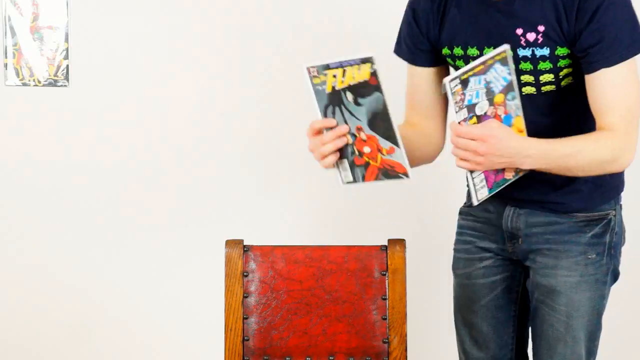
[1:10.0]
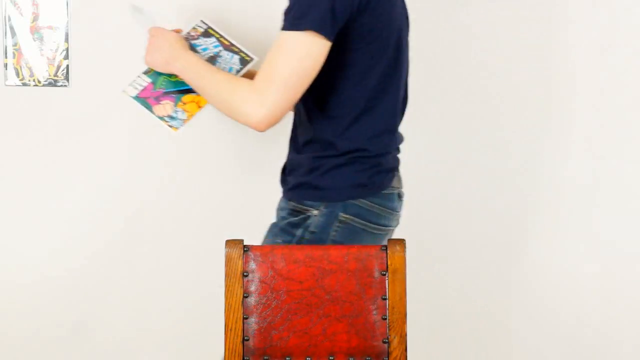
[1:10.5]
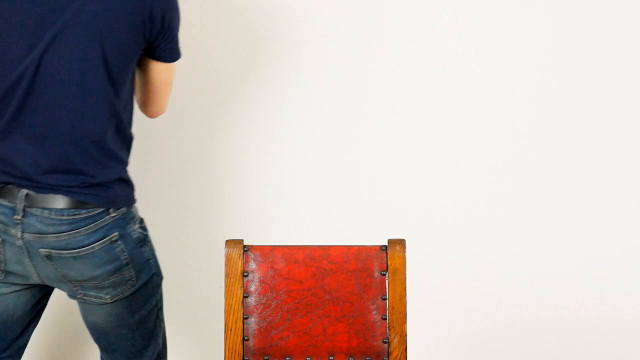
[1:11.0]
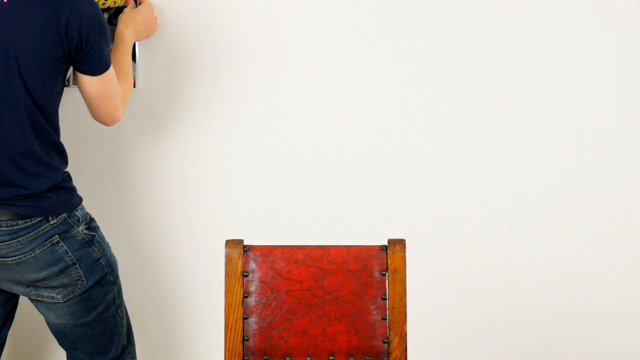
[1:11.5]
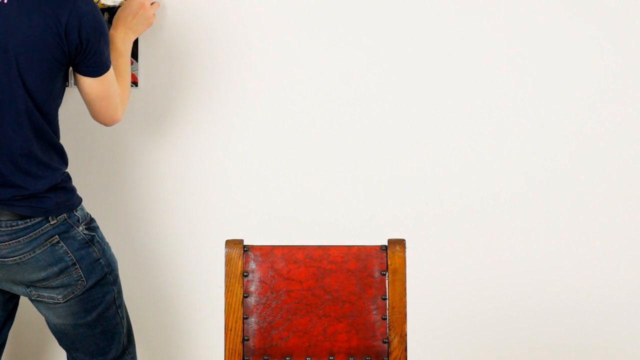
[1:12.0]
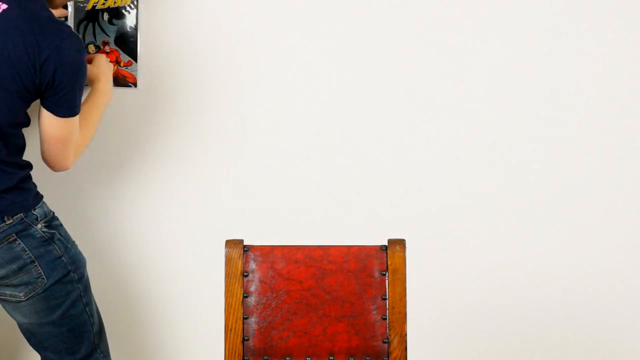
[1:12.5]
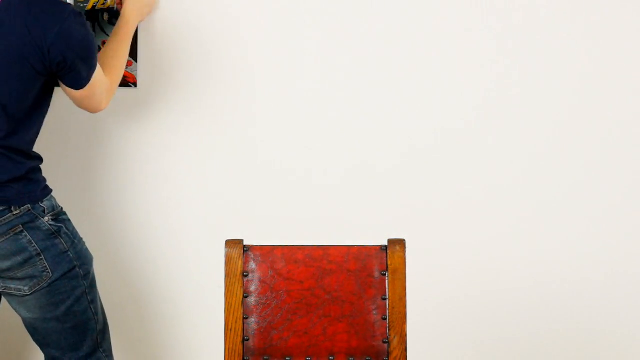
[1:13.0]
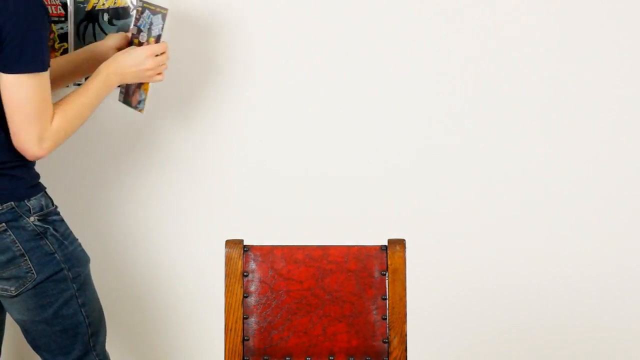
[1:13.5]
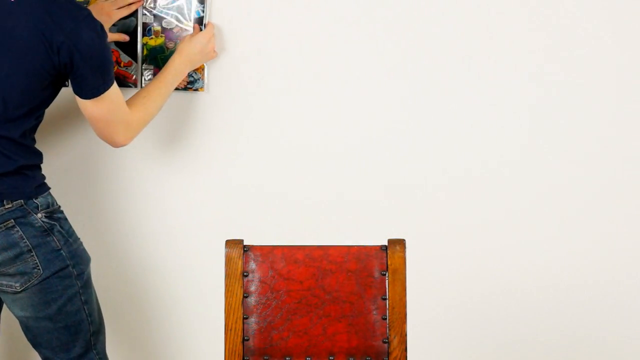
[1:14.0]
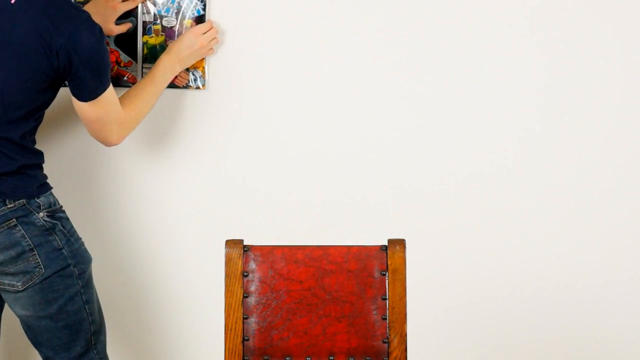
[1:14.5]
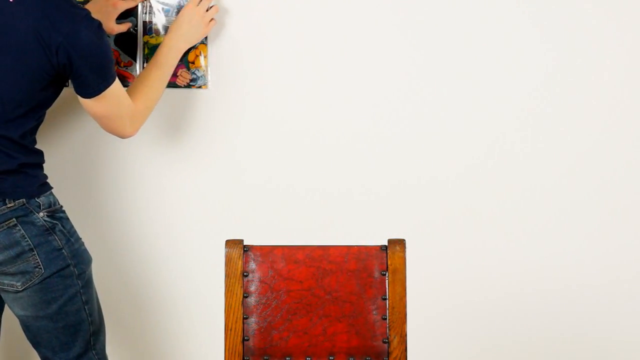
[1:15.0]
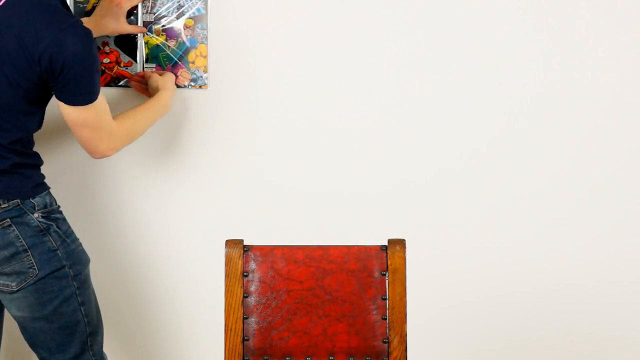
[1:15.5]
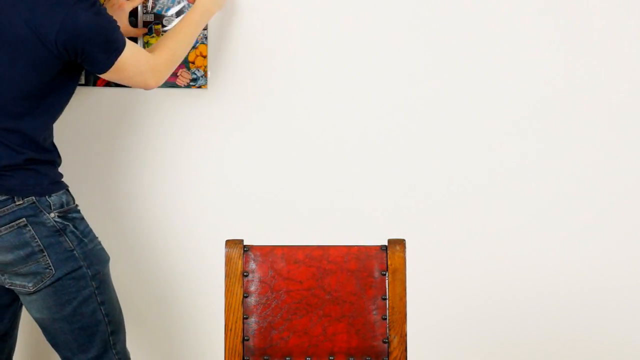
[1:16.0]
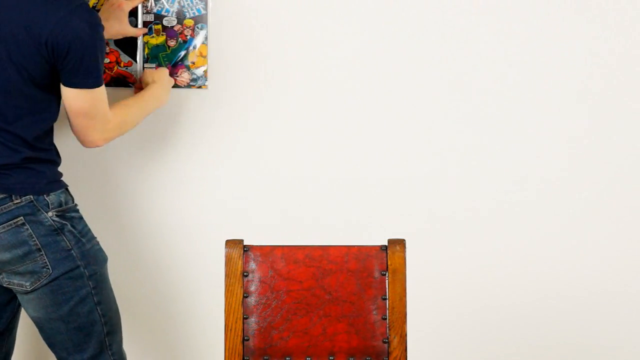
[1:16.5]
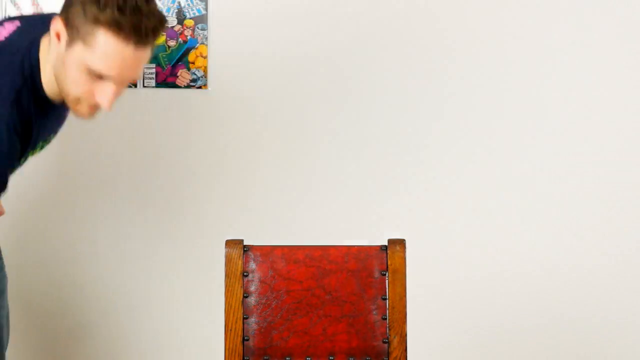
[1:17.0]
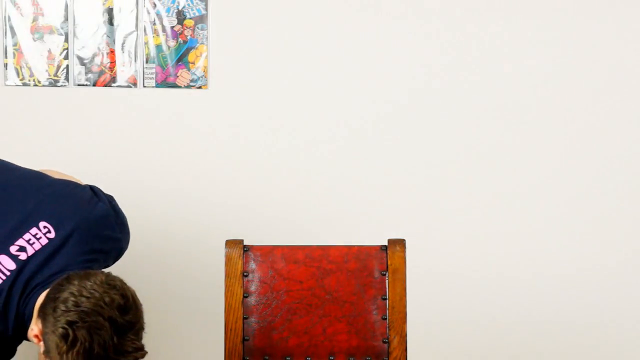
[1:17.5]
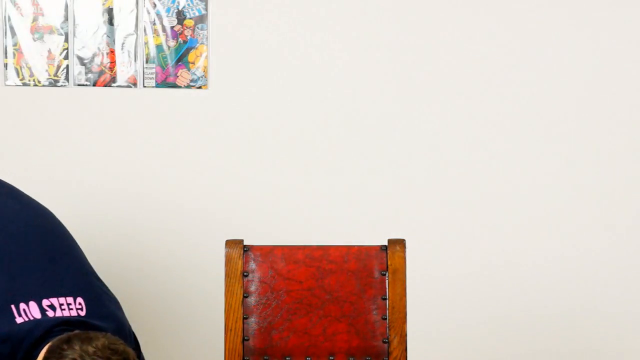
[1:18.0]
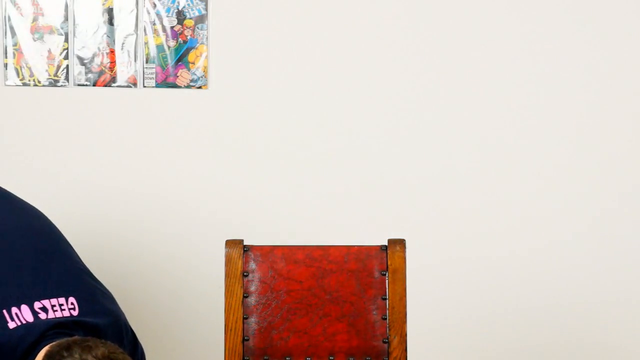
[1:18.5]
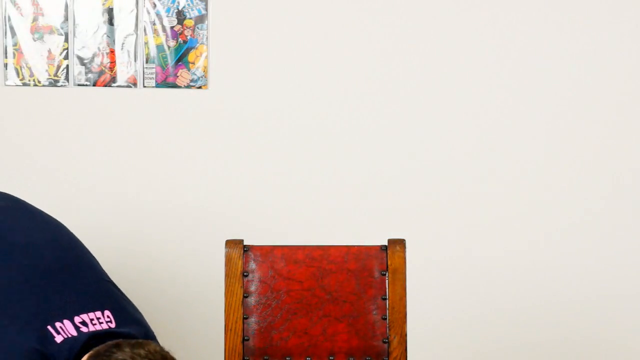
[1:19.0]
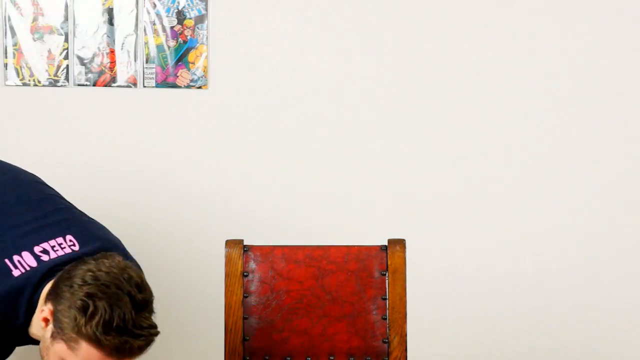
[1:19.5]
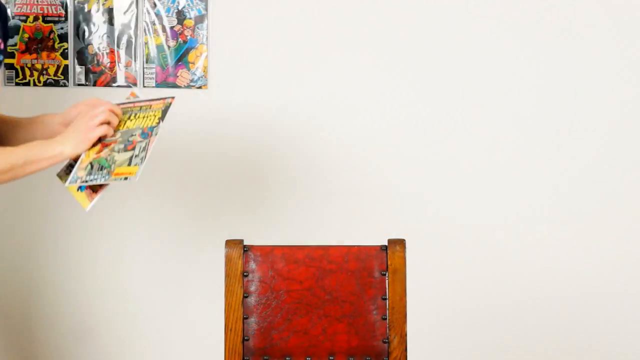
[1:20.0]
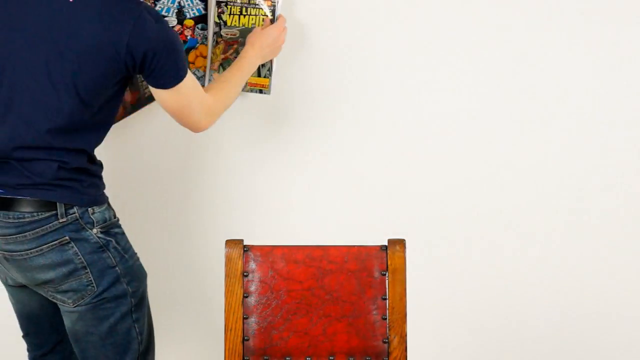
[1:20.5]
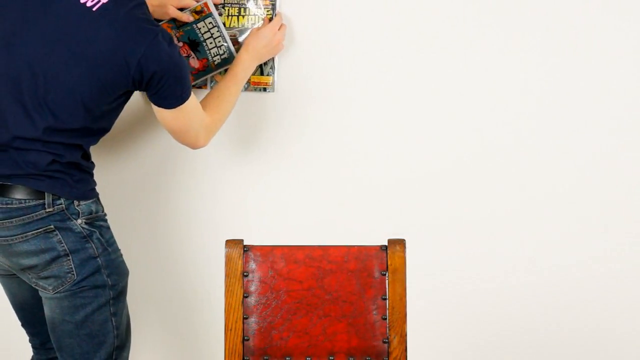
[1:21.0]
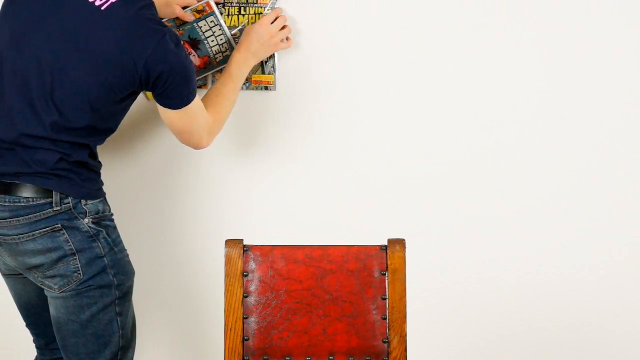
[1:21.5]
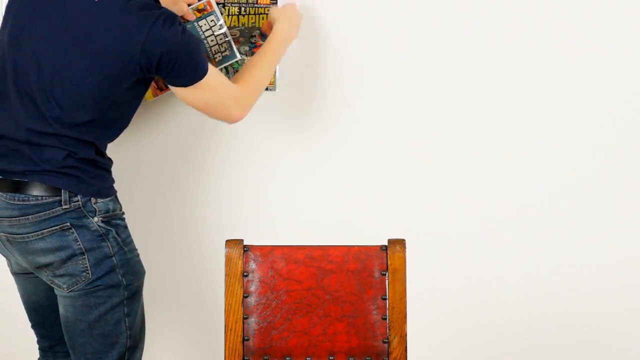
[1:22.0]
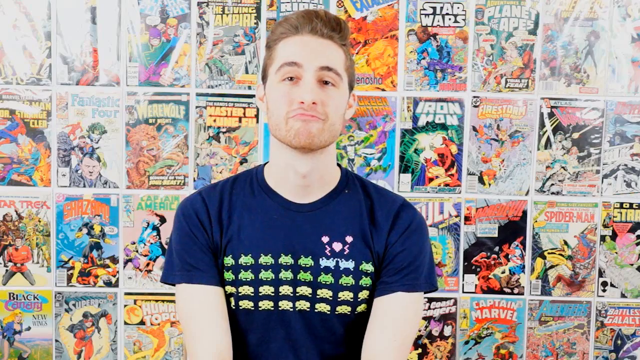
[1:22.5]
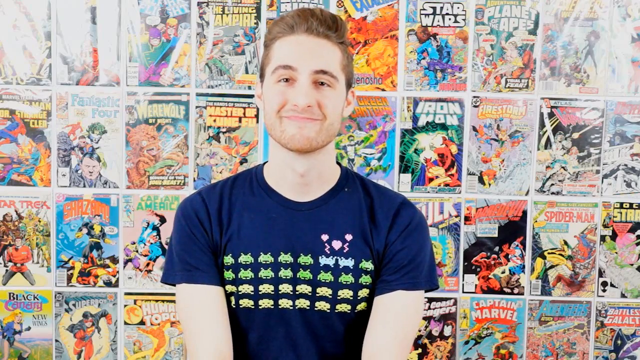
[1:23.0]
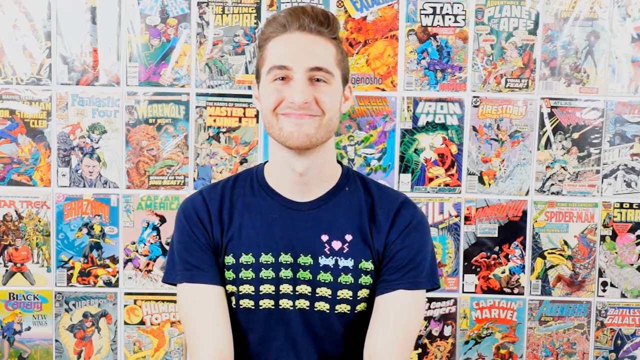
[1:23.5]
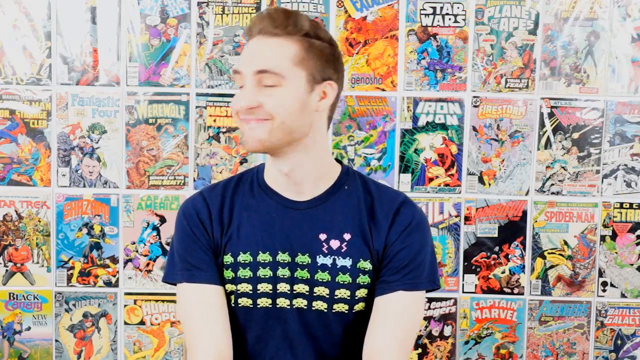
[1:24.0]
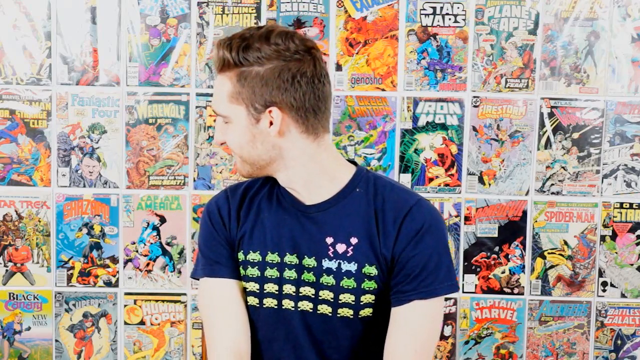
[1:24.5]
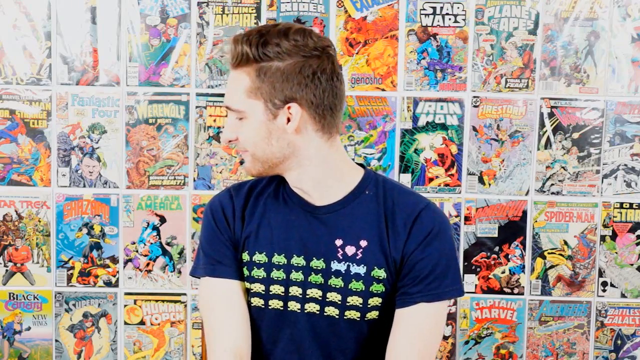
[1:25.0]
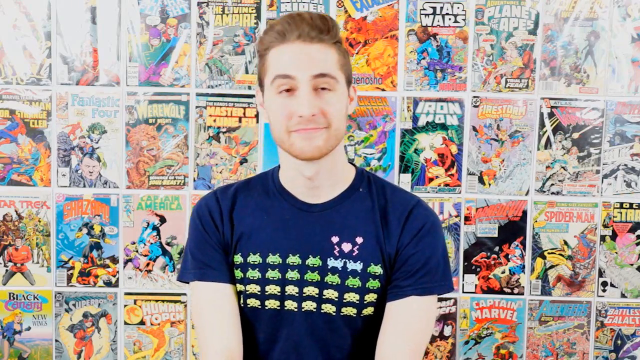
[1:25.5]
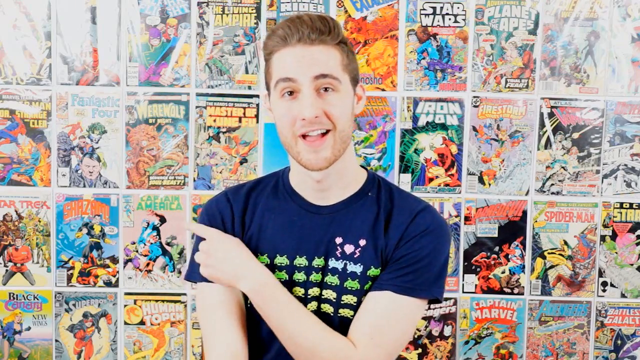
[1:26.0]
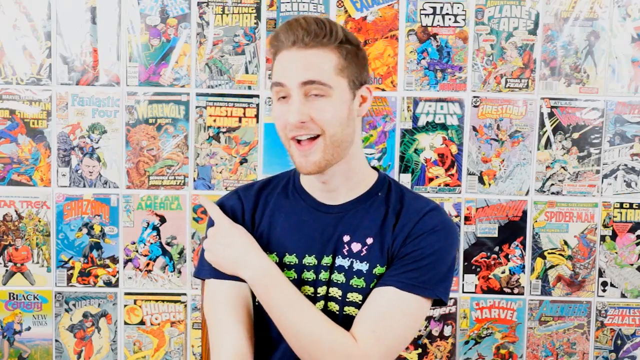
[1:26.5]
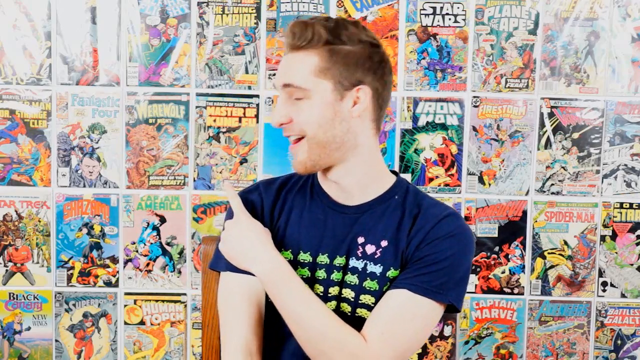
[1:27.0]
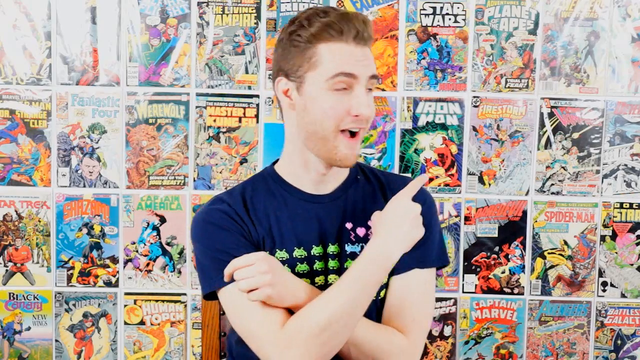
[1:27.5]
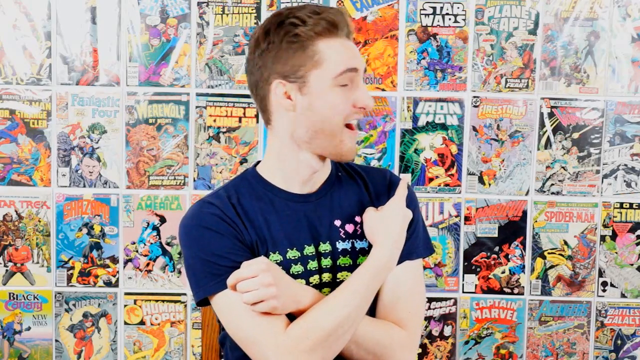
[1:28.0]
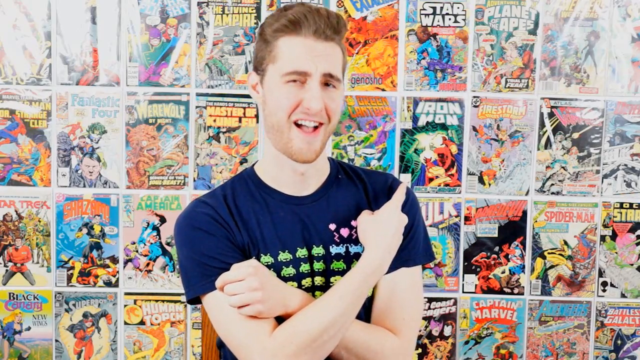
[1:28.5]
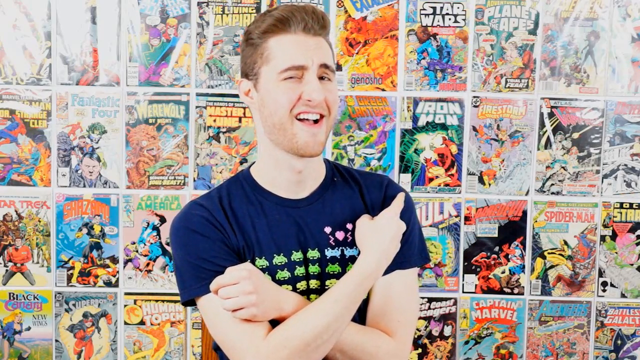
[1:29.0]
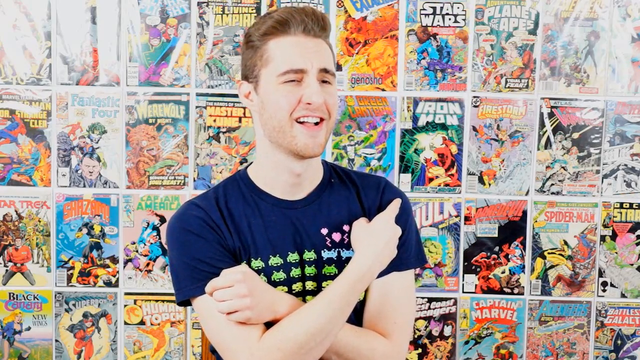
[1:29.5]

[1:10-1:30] The person appears to be taping comic book covers wrapped in plastic onto the light gray wall in the background. Part of the top of a chair with a red cushion is visible at the very center bottom of the frame. On the left side of the screen, he bends over, picks up two more comic book covers, and is about to tape one of them to the wall when the scene quickly changes. He is now sitting down, seen from the front, smiling, and the entire wall behind him is covered in comic book covers. He looks back to his right, looks back at the camera, points over his right shoulder with his left index finger, then does the same on the opposite side, opens his mouth, and nods at the camera.